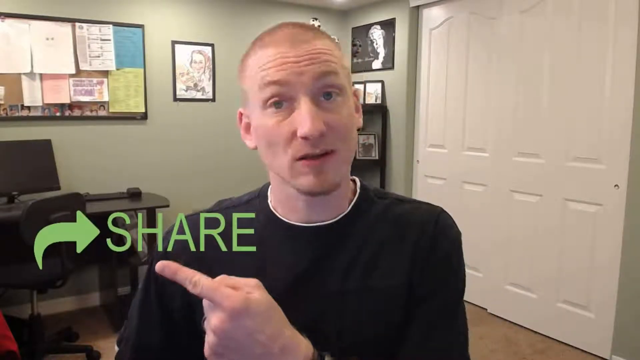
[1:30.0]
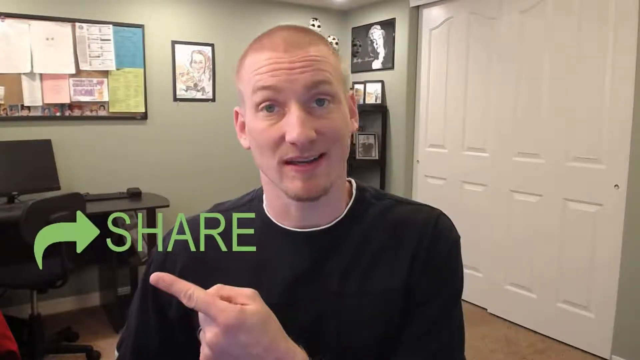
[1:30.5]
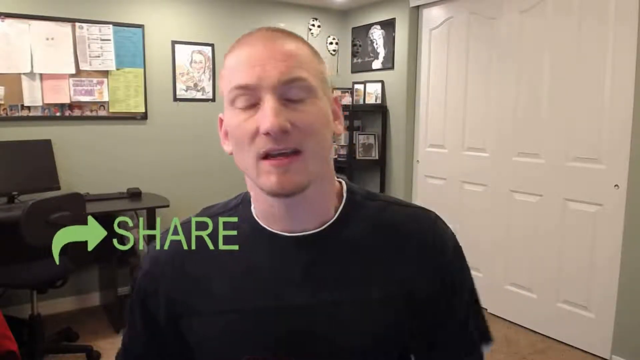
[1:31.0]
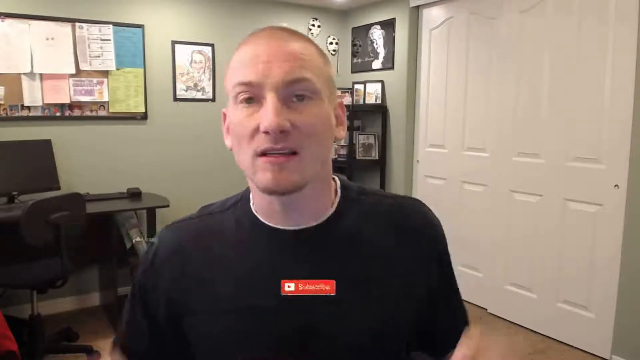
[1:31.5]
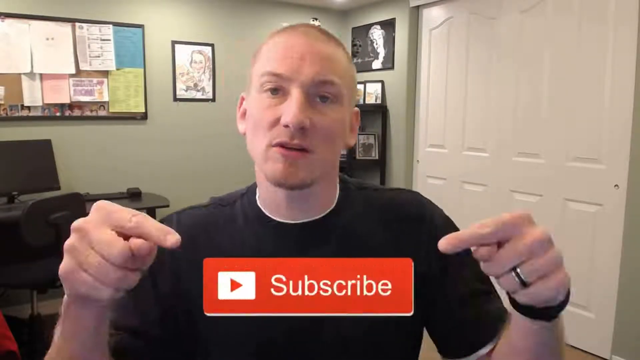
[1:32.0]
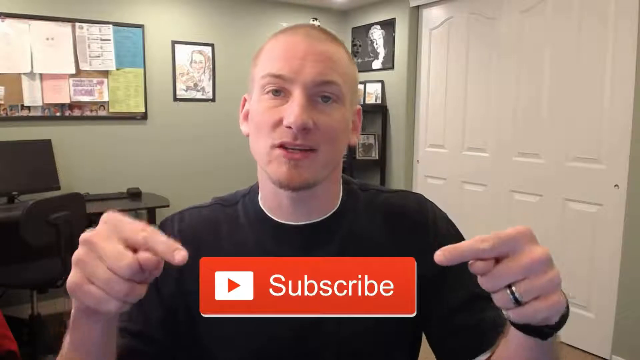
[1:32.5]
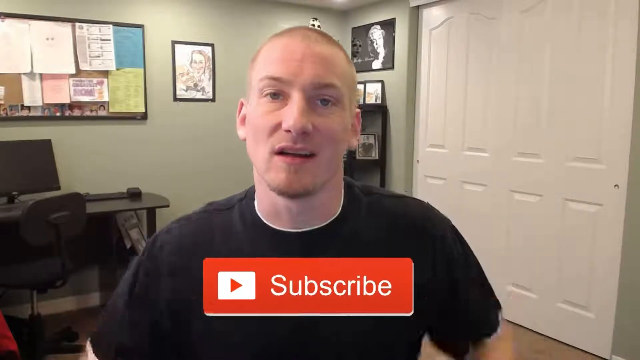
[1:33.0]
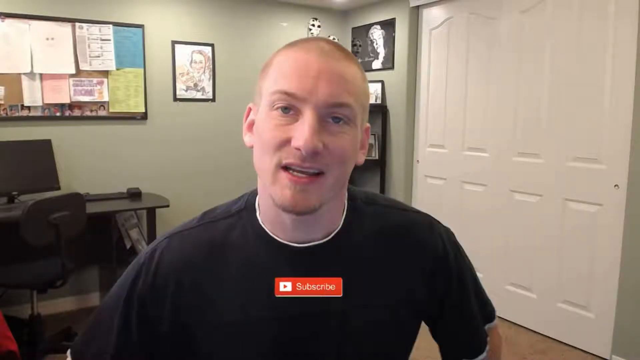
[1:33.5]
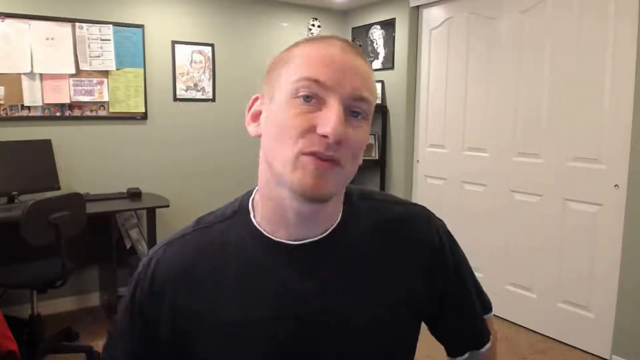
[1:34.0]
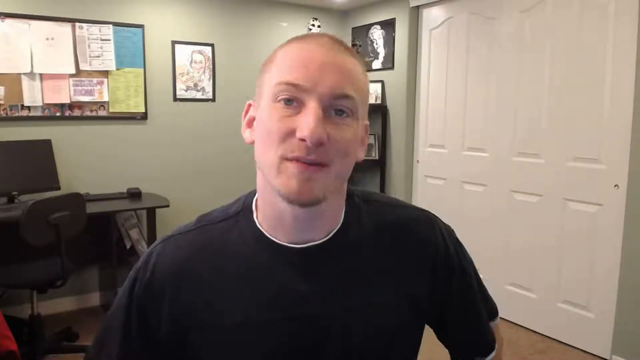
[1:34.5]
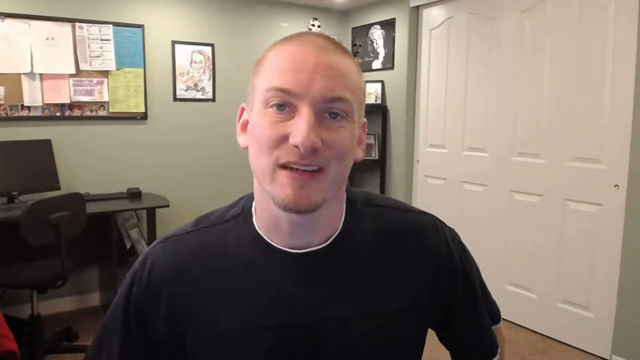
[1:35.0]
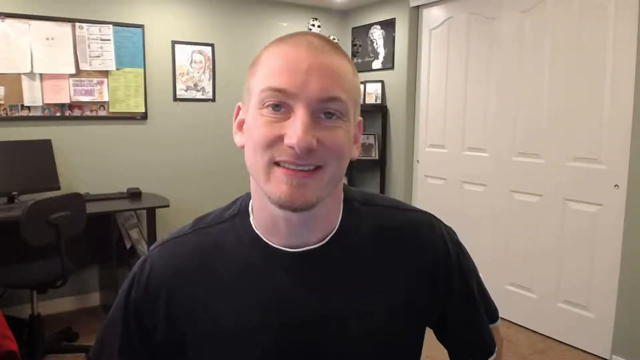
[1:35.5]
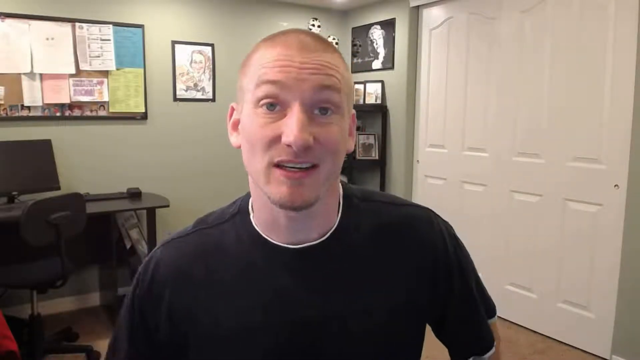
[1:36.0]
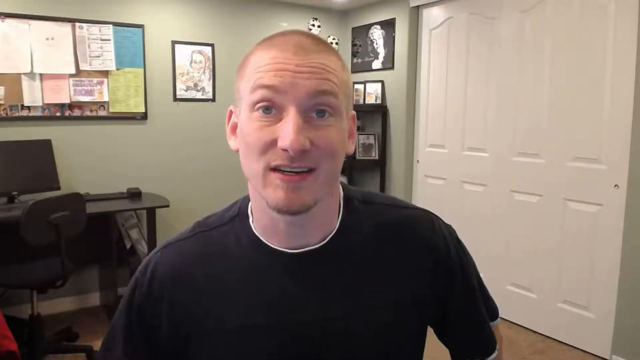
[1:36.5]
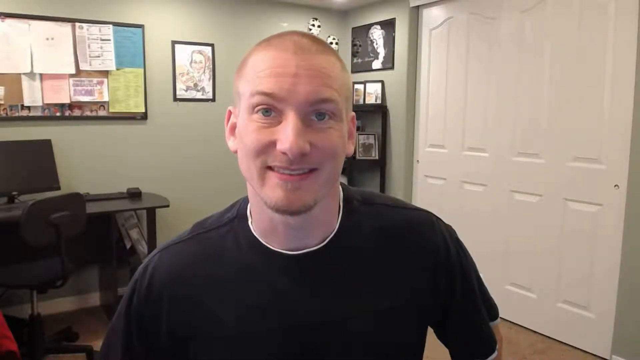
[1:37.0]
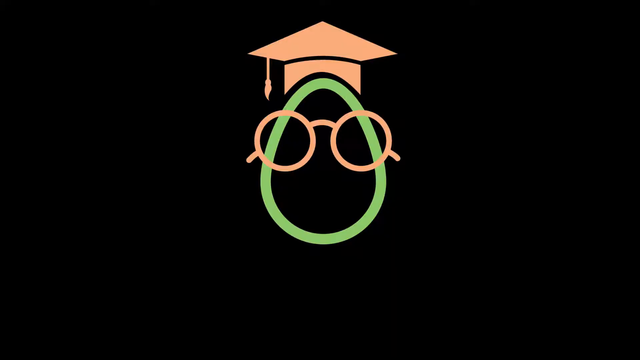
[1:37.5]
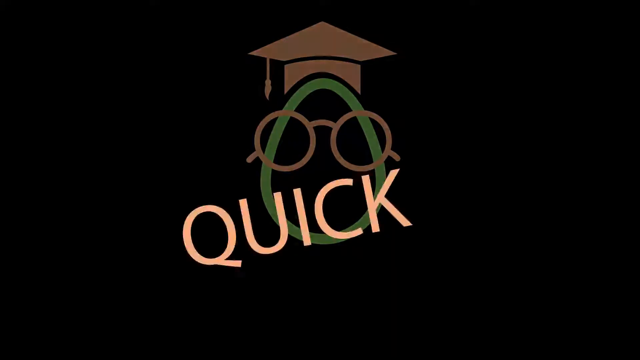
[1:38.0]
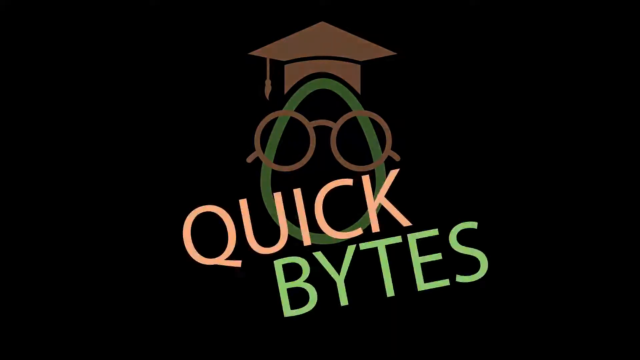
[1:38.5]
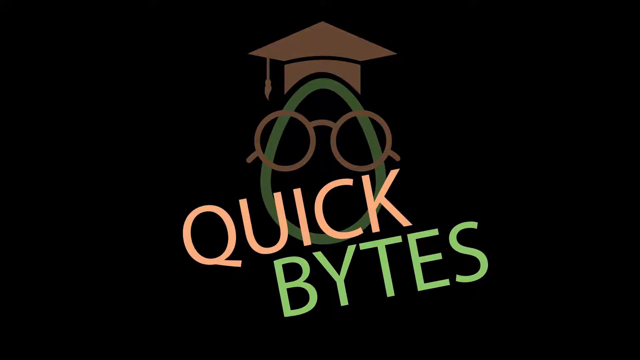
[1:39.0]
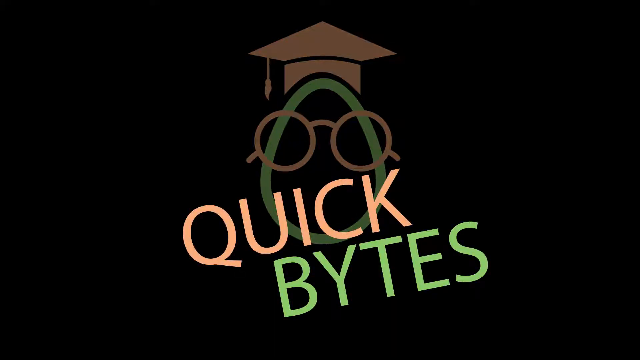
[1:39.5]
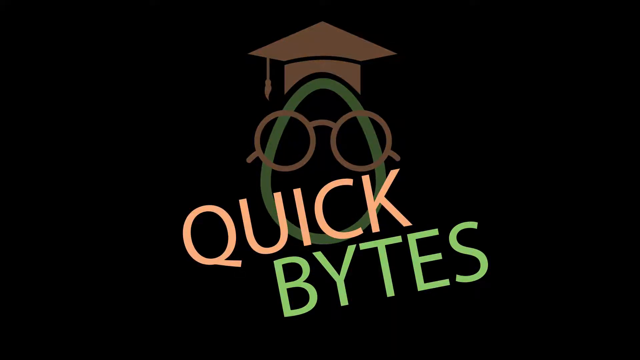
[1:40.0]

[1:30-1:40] A man in a black shirt sits in a green-looking room with white doors behind him, speaking directly into the camera. He points to an area on the screen that has an arrow and says "share." An orange box then pops up at the bottom of the screen reading "Subscribe," and the man points his fingers at it. He continues talking into the camera, smiling, and then the video goes to a black screen that says "Quick Bytes."